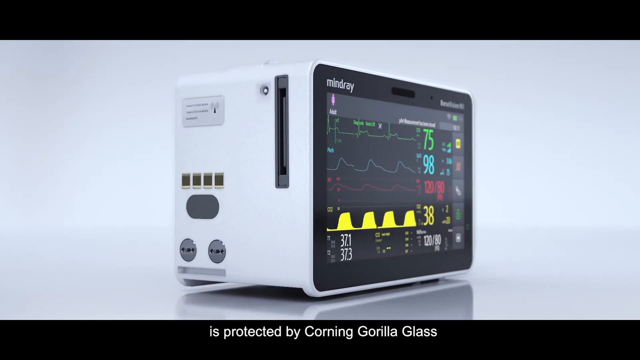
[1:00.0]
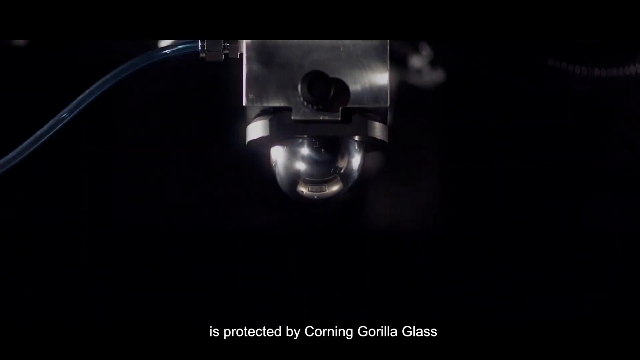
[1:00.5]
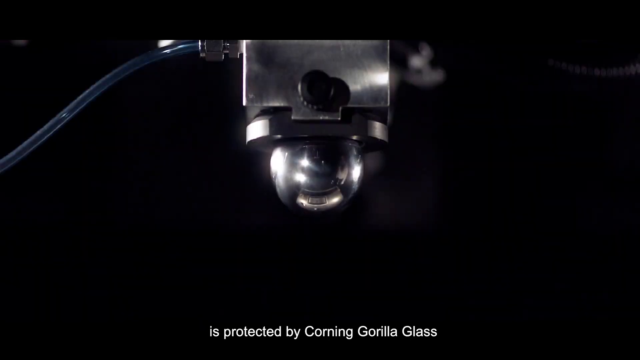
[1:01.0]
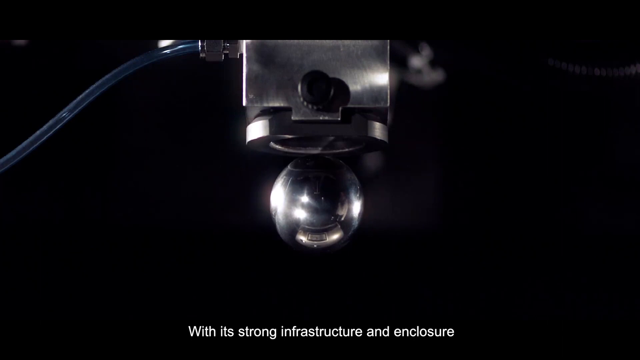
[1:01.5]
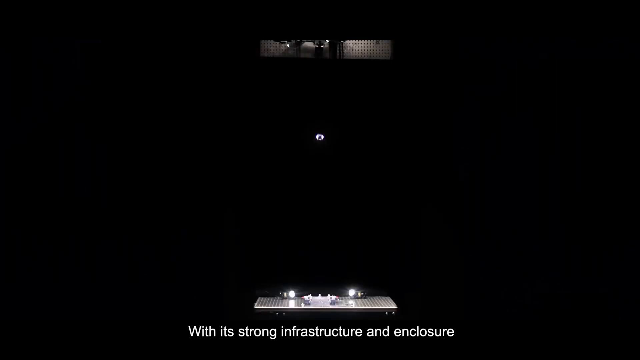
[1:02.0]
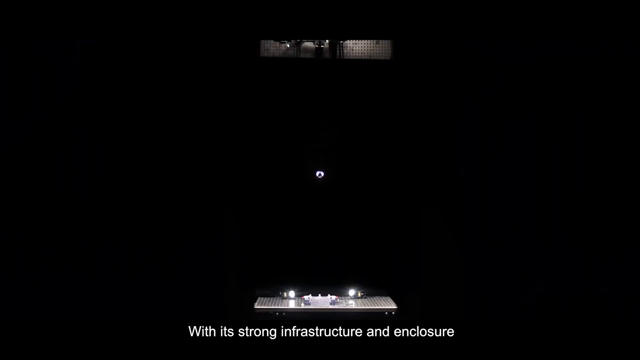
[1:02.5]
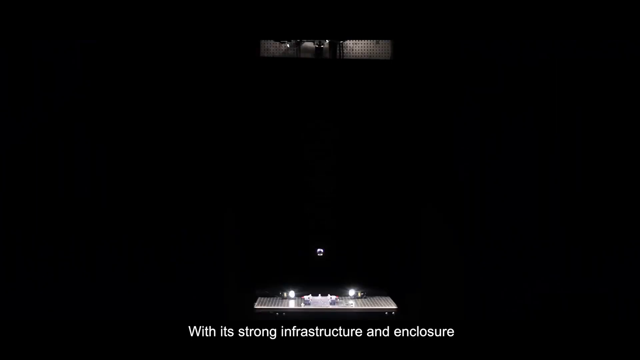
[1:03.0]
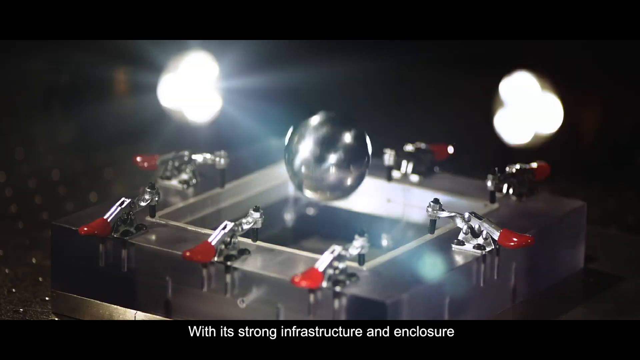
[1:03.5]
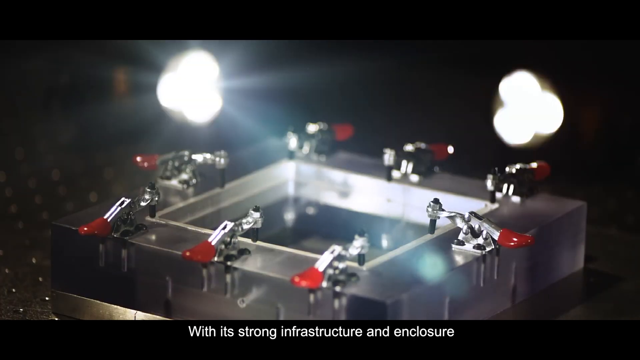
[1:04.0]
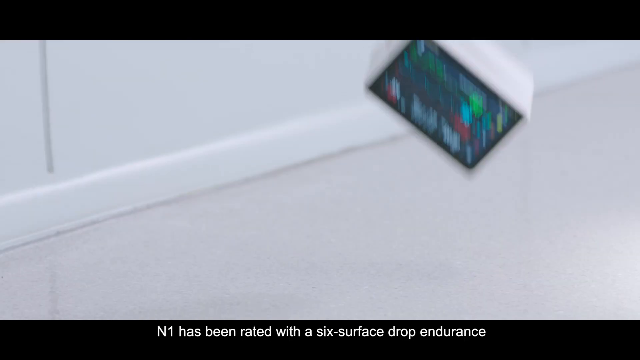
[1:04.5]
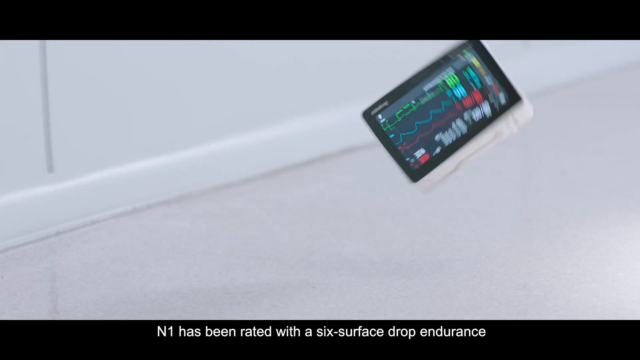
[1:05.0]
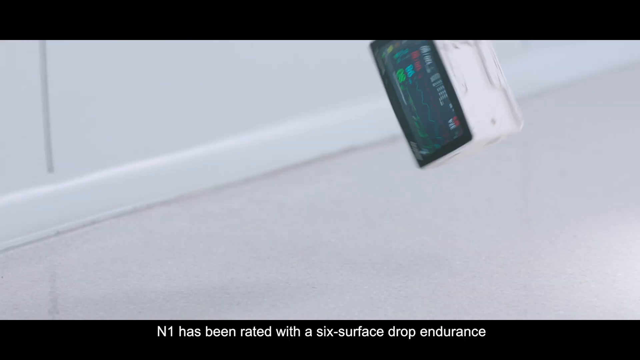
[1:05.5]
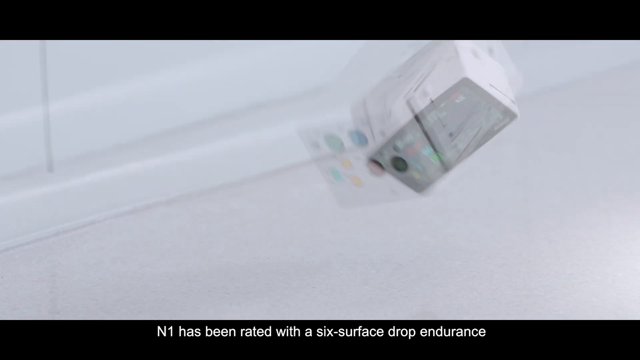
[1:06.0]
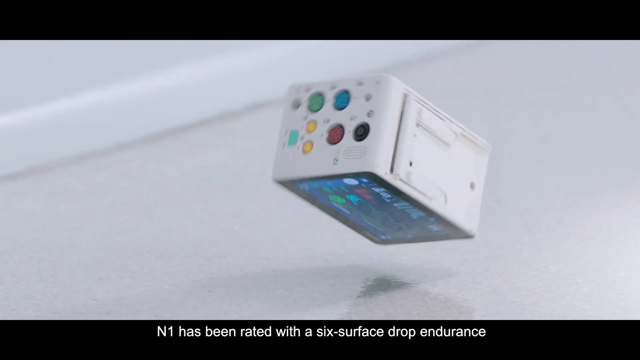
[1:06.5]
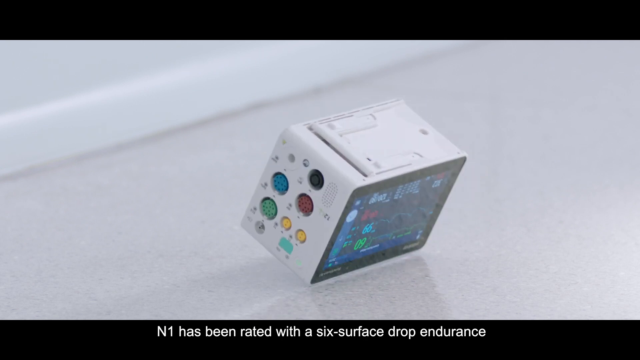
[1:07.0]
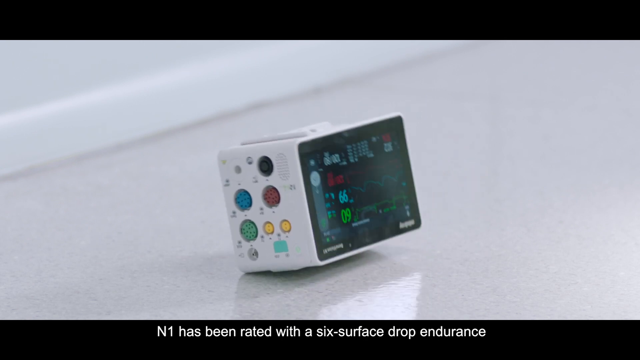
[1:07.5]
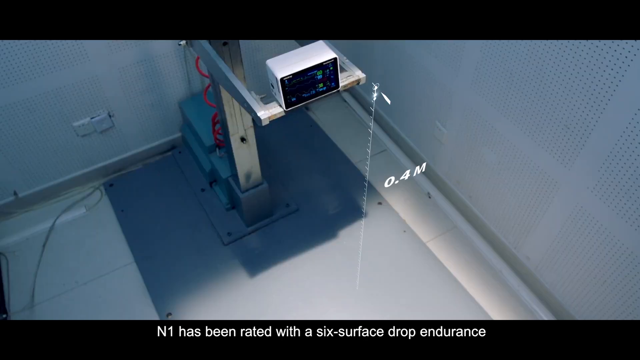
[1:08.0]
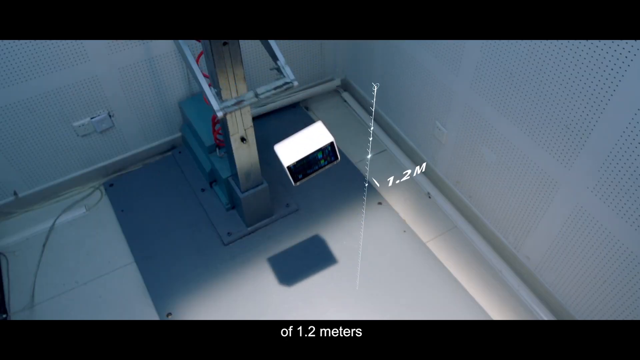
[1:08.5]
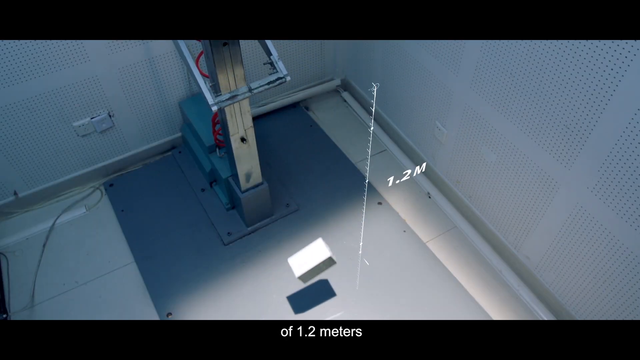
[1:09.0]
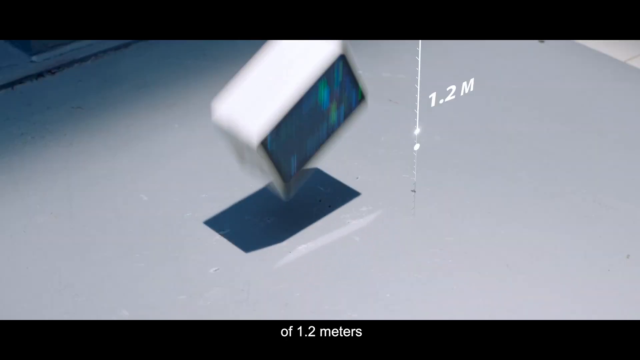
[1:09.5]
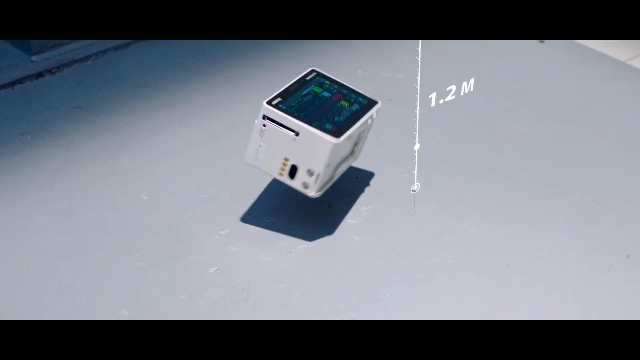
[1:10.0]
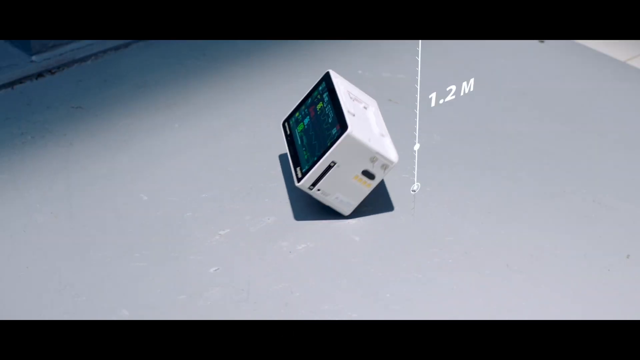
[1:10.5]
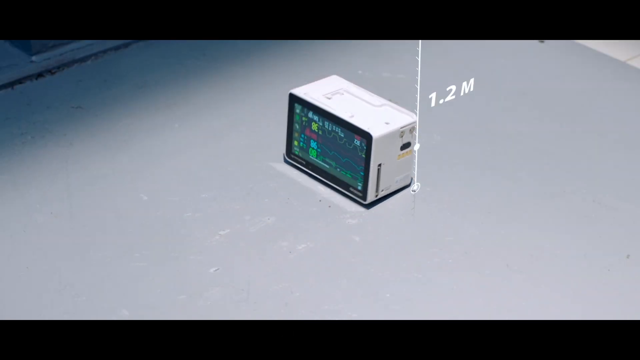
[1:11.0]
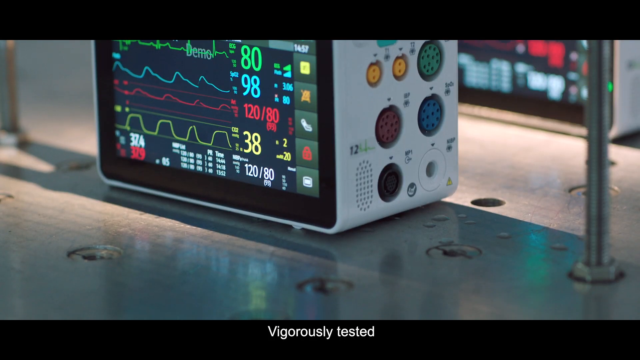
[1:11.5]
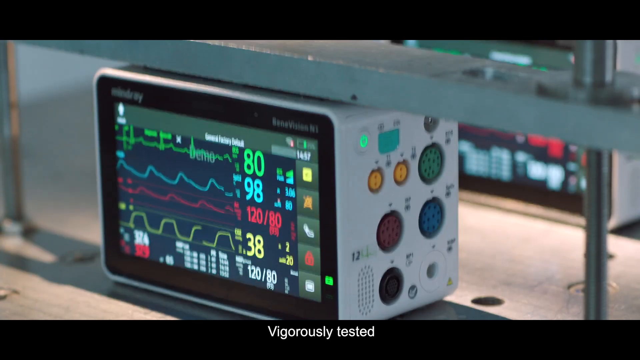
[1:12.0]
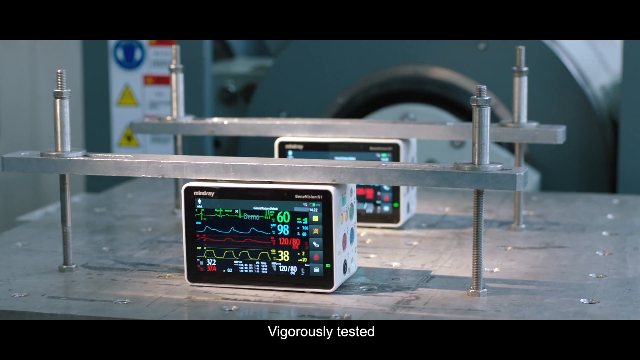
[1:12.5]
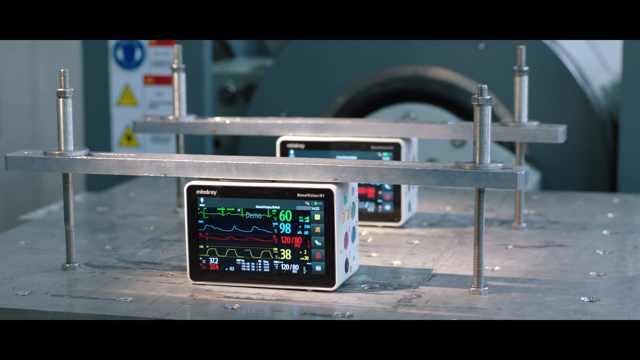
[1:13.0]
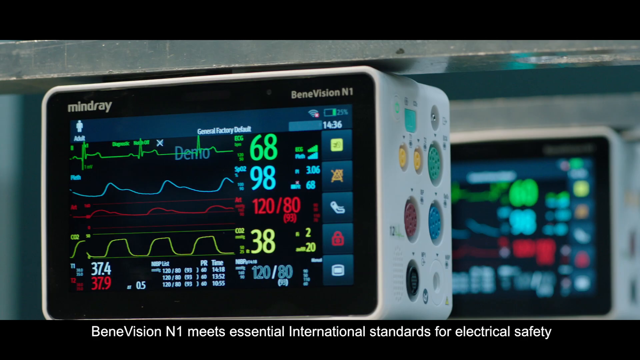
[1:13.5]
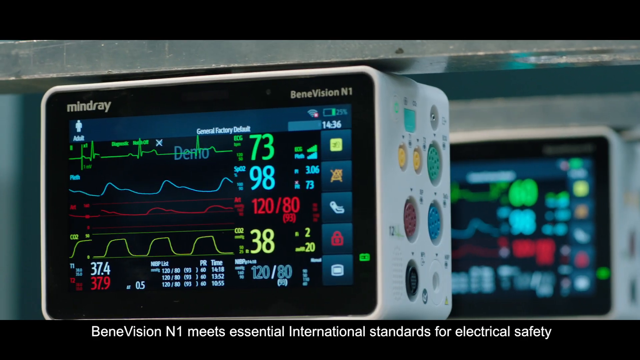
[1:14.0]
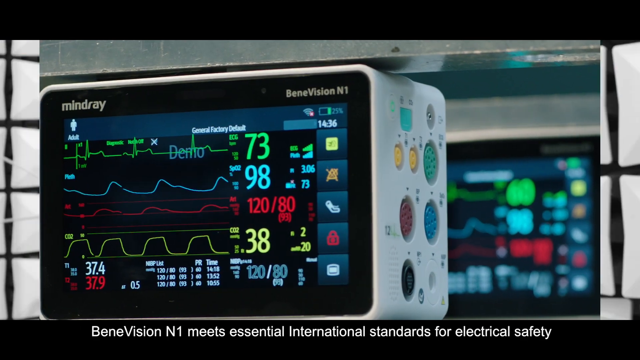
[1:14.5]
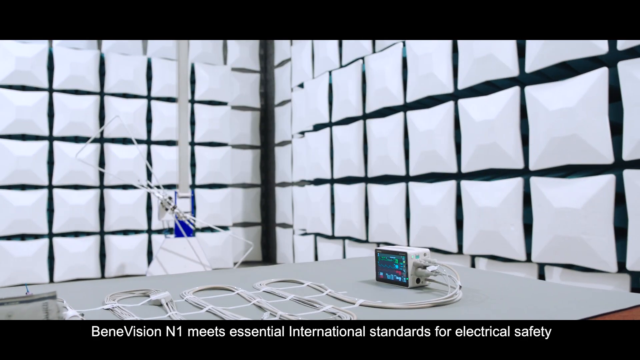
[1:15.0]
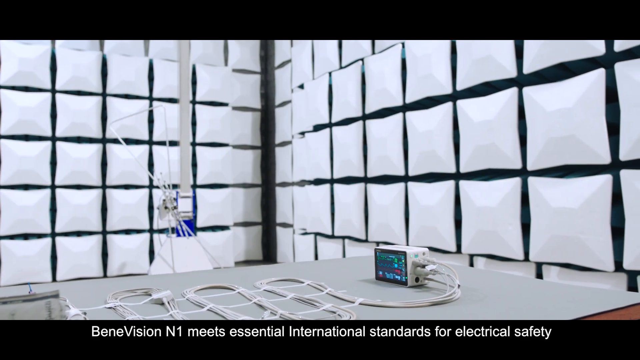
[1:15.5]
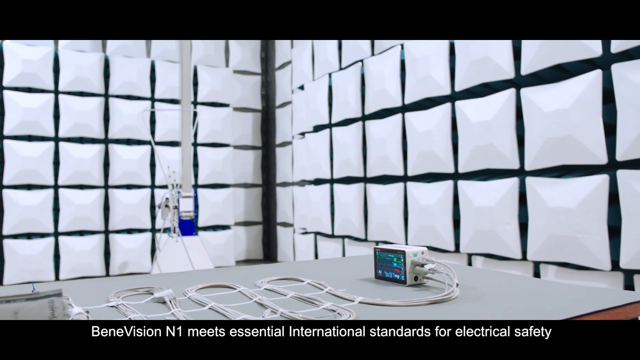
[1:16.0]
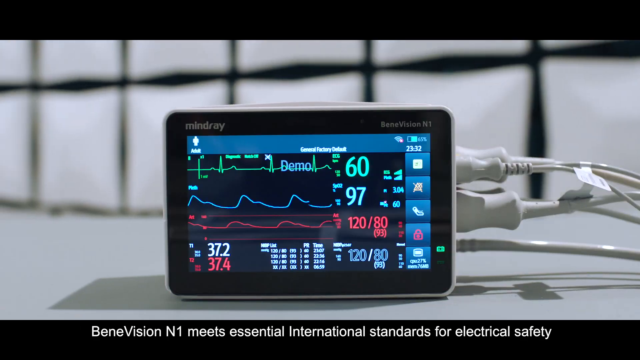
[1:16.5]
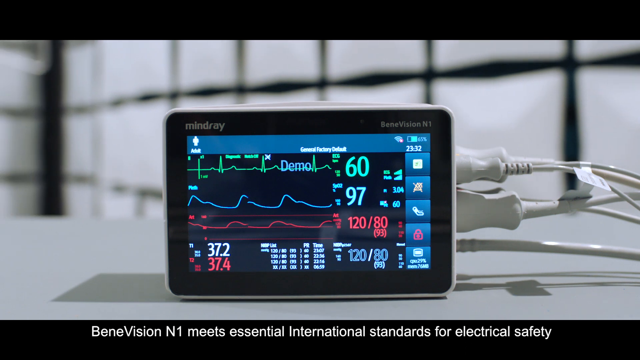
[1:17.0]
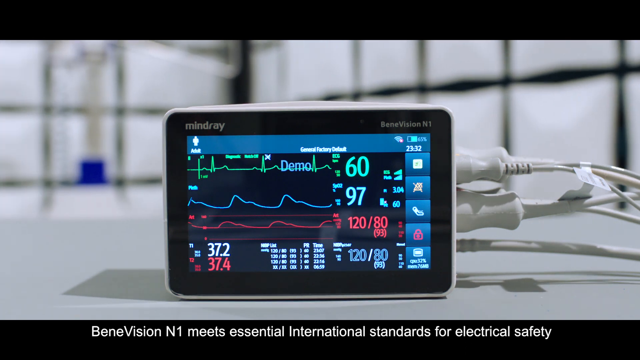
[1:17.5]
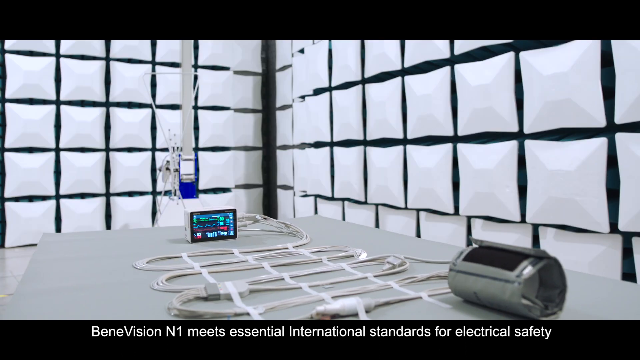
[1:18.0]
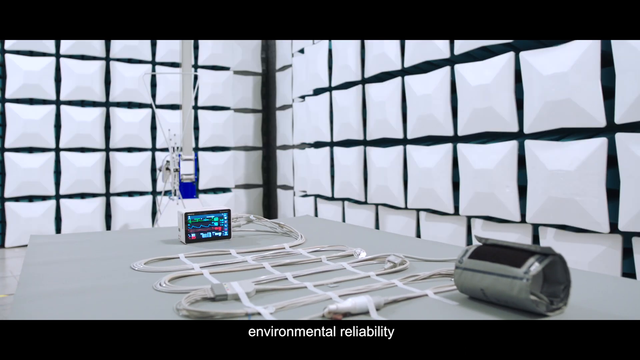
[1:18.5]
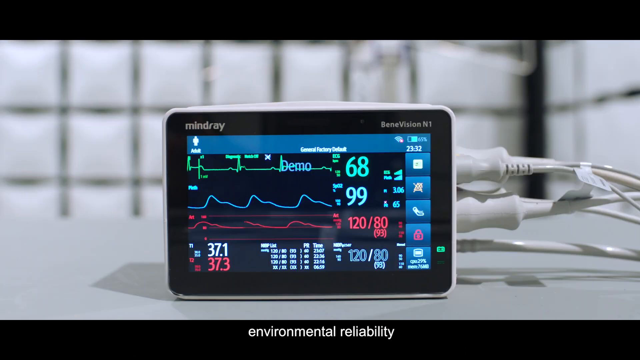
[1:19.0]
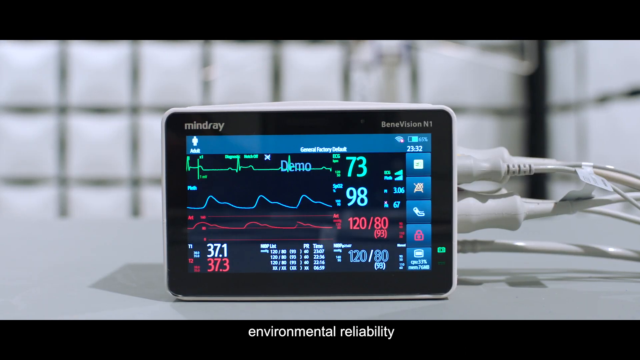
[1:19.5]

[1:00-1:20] The product is shown for a second, and then water drops onto the surface of the machine on the inside and bounces right back up. The product is then dropped on the floor with no apparent effect, and the drop height is shown as 1.2 meters. Next it is crushed: it is plugged in and turned around in a table-type apparatus while metal bars force themselves down onto the machine, with a lot of pressure apparently being applied.